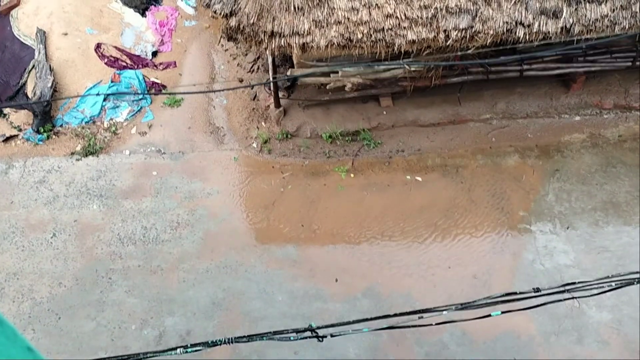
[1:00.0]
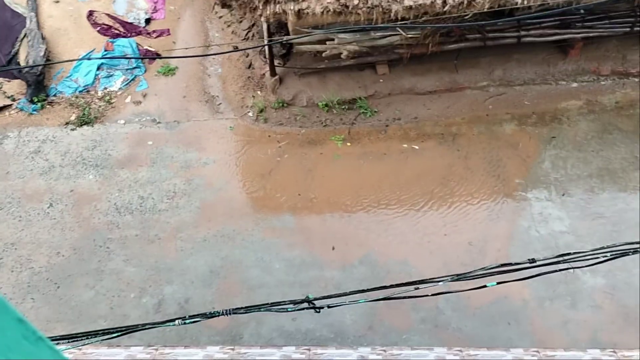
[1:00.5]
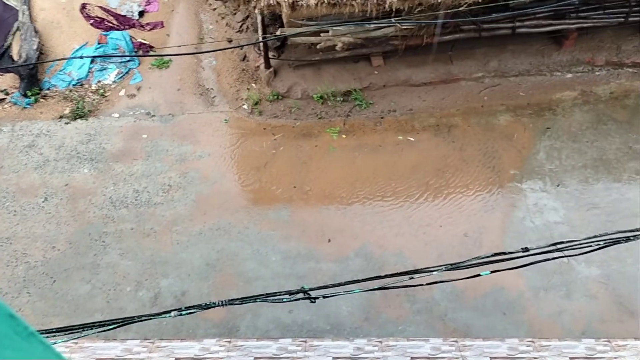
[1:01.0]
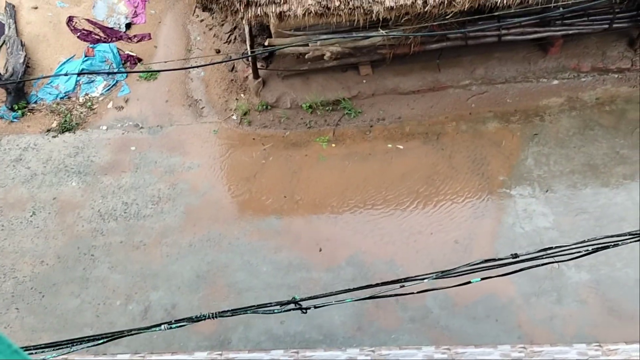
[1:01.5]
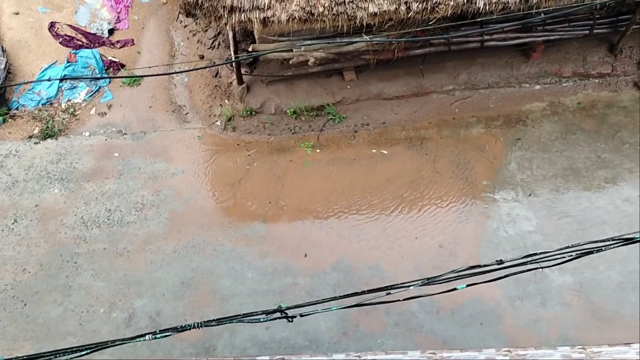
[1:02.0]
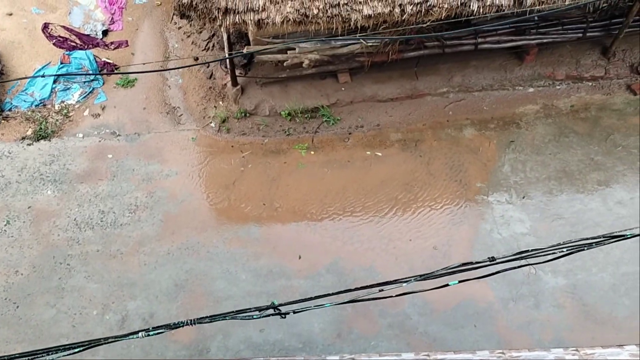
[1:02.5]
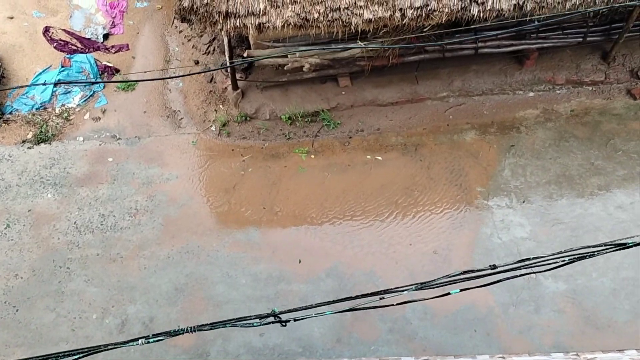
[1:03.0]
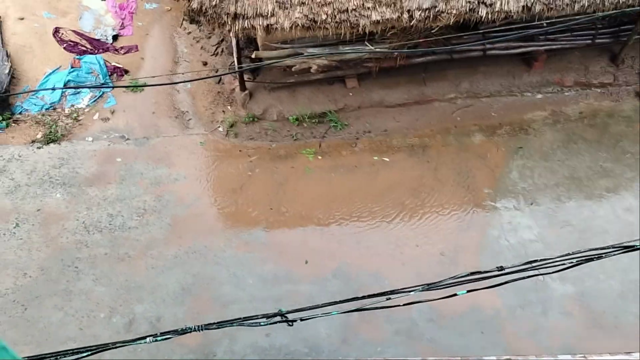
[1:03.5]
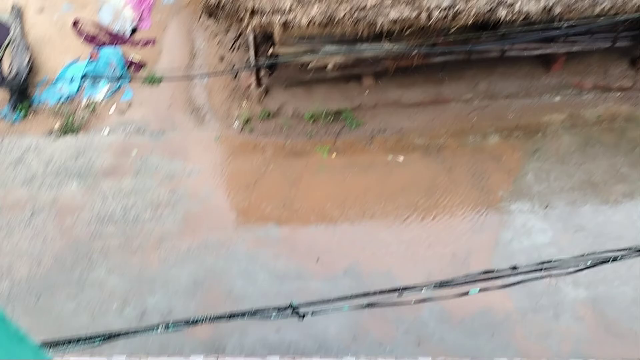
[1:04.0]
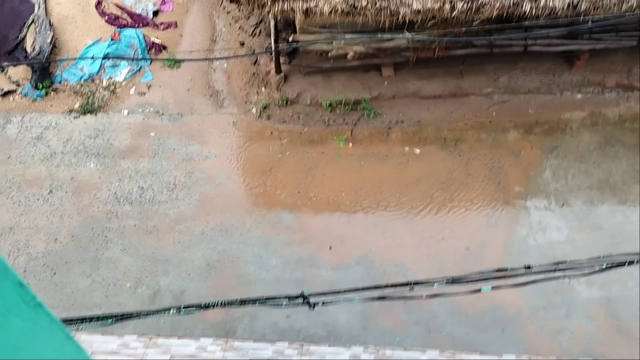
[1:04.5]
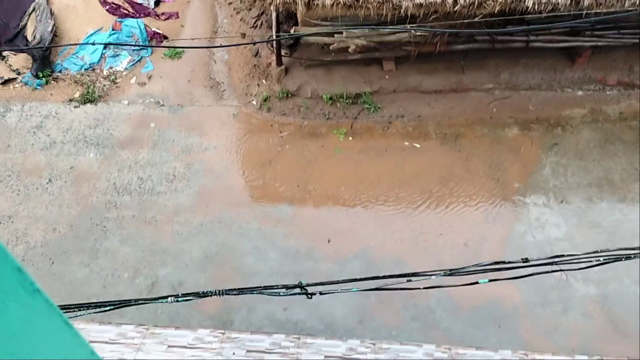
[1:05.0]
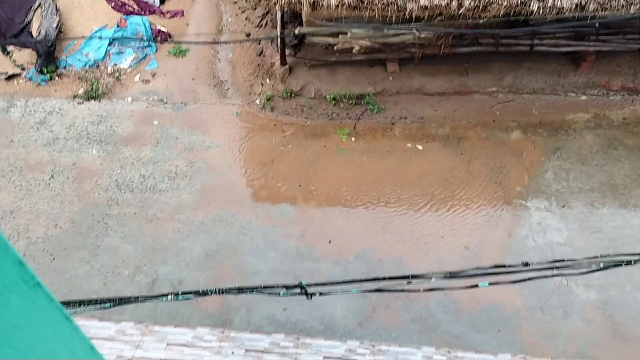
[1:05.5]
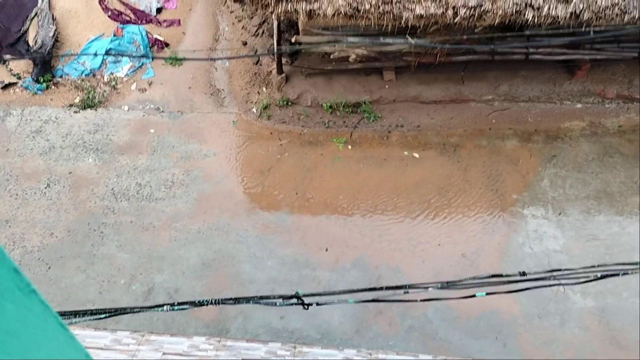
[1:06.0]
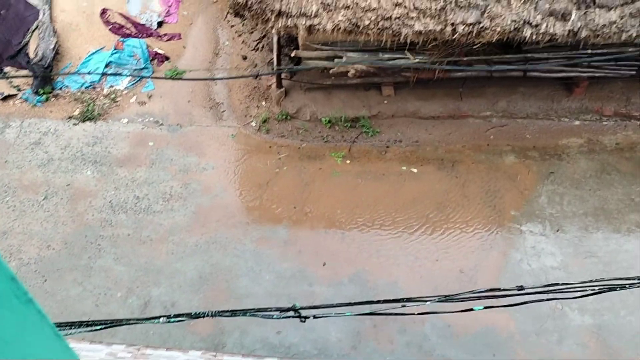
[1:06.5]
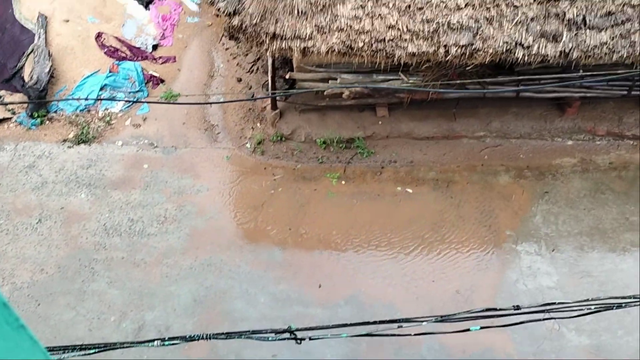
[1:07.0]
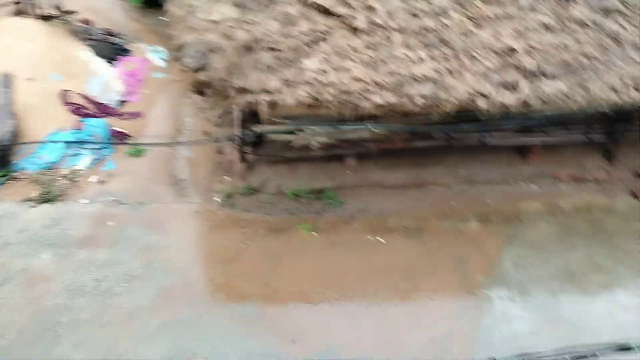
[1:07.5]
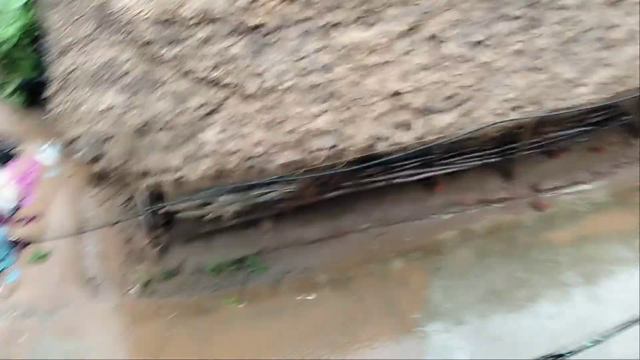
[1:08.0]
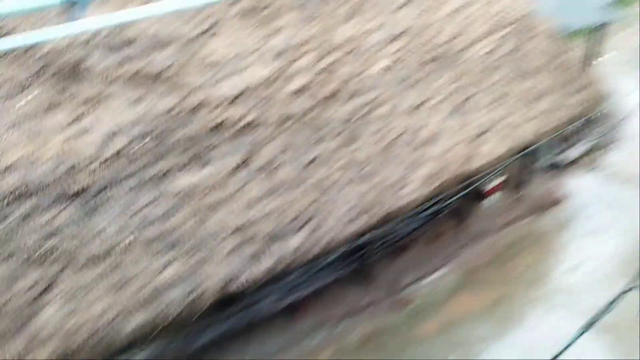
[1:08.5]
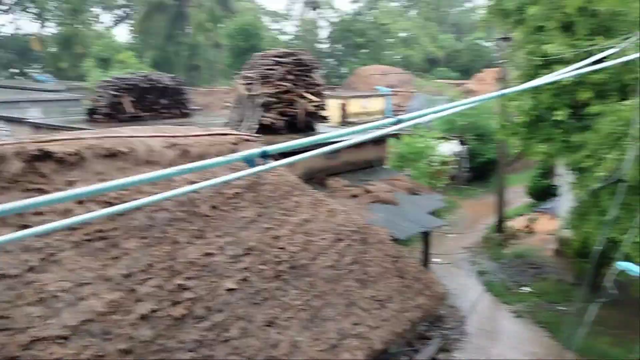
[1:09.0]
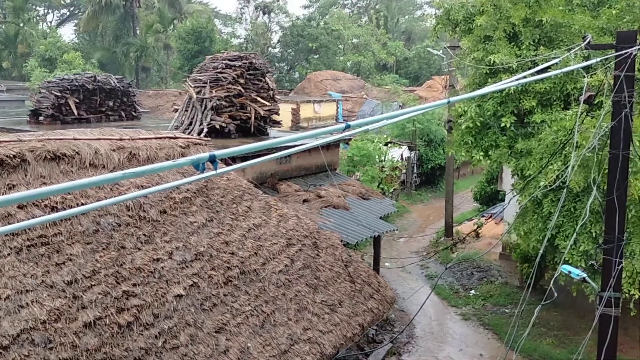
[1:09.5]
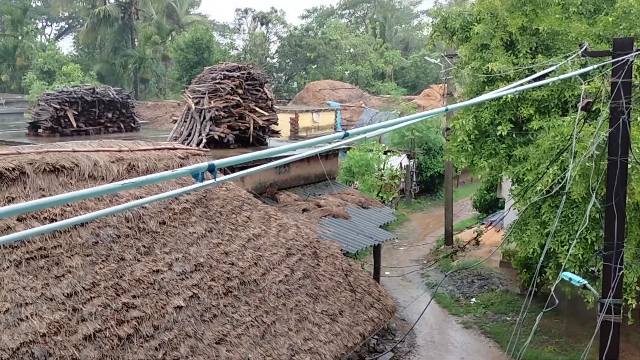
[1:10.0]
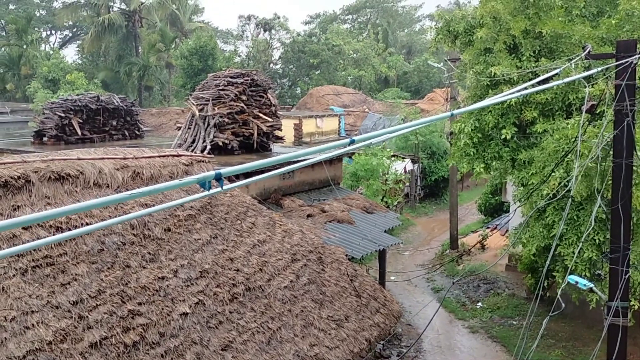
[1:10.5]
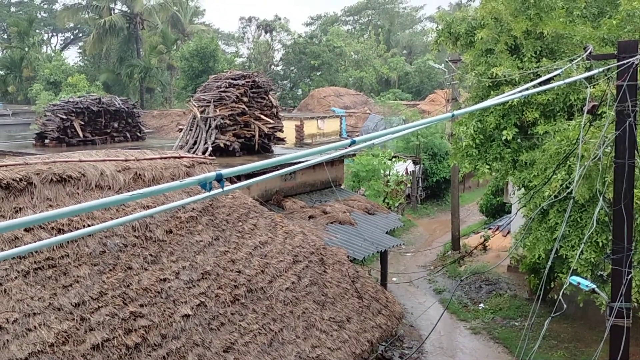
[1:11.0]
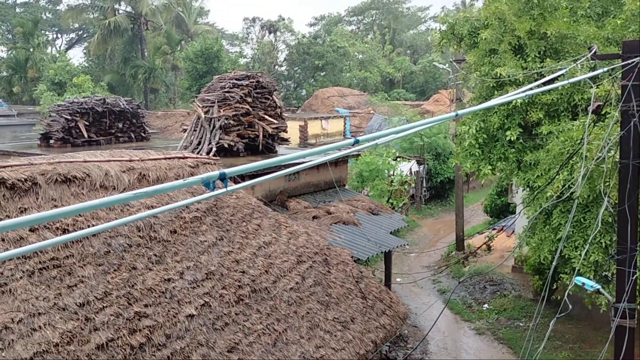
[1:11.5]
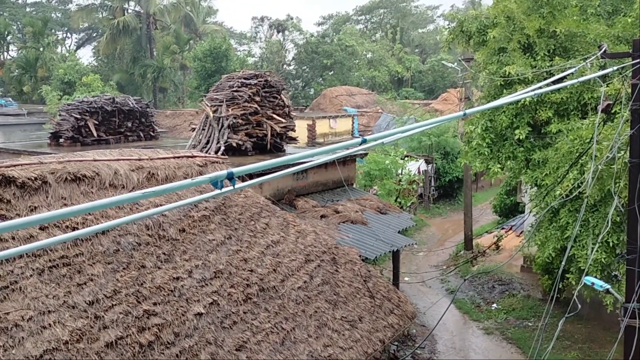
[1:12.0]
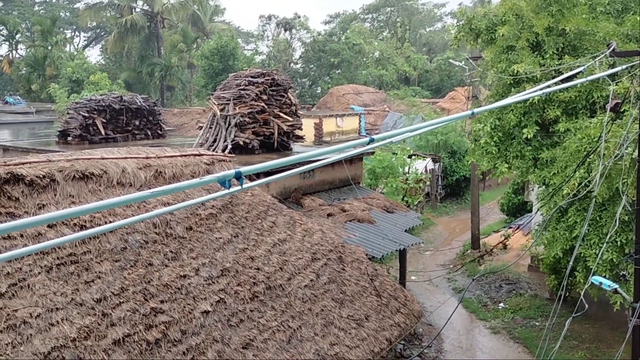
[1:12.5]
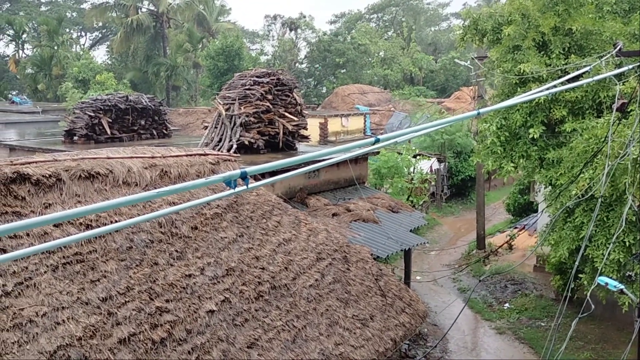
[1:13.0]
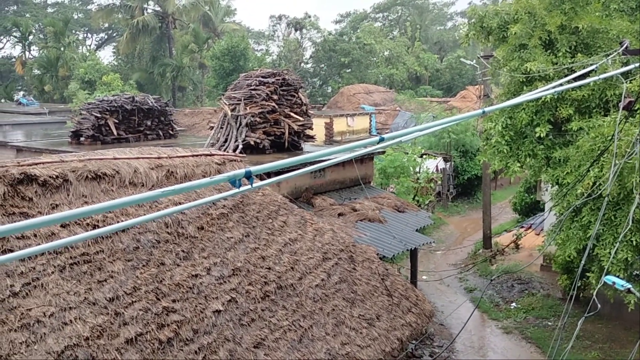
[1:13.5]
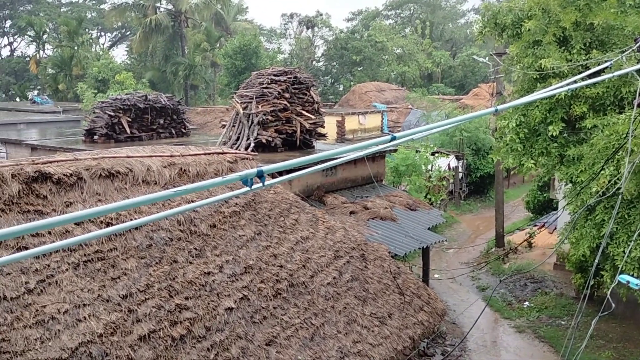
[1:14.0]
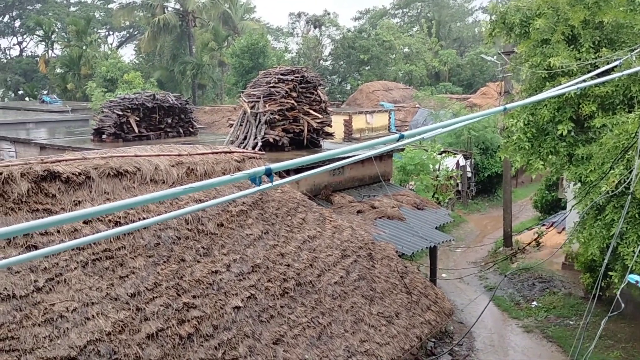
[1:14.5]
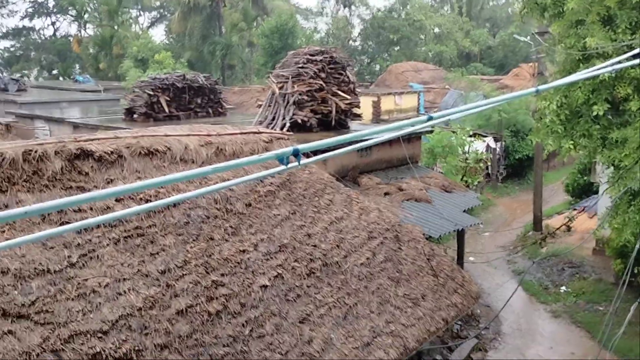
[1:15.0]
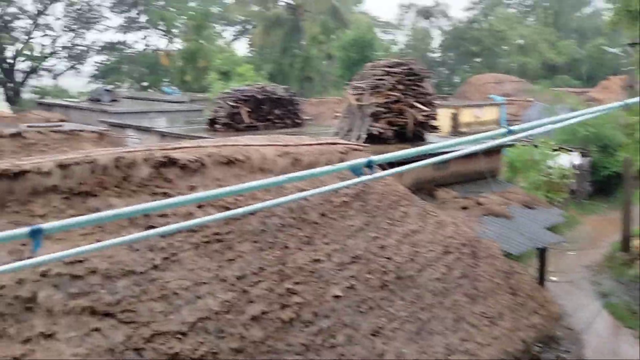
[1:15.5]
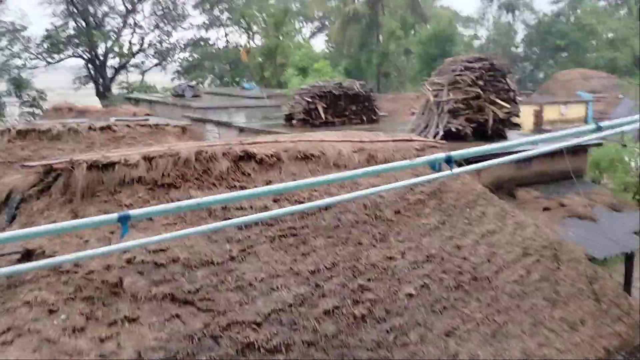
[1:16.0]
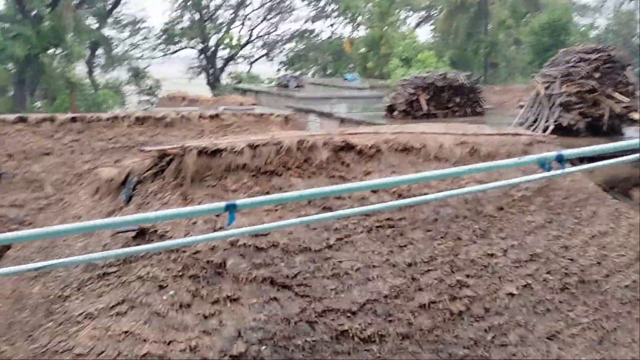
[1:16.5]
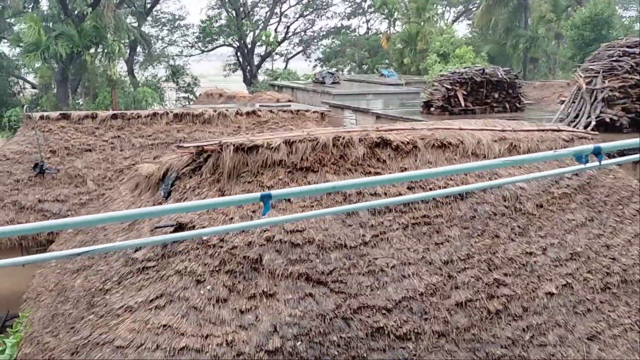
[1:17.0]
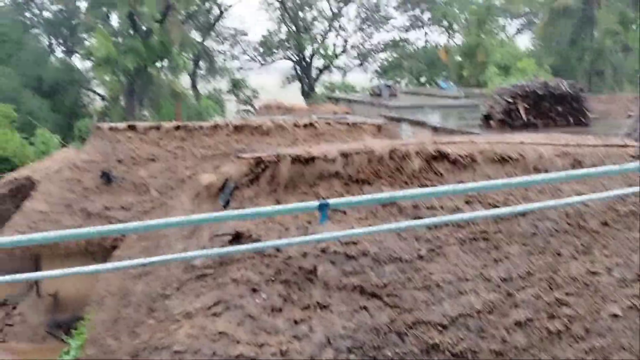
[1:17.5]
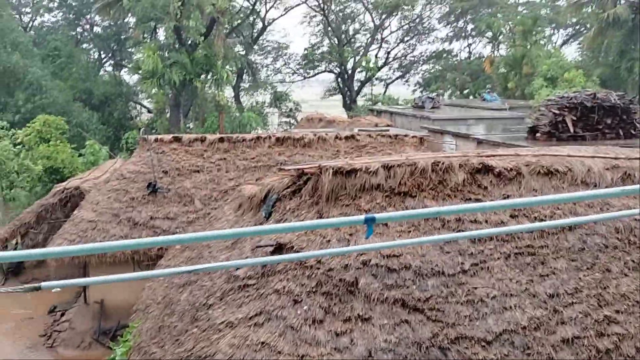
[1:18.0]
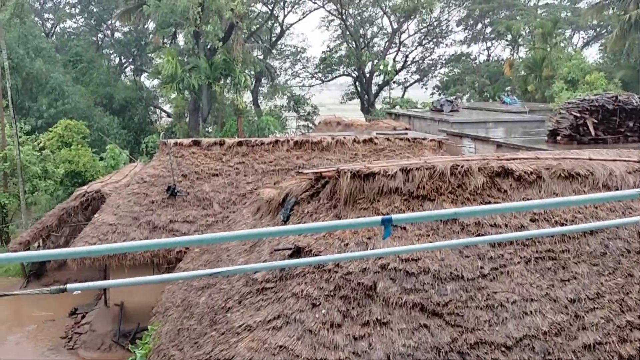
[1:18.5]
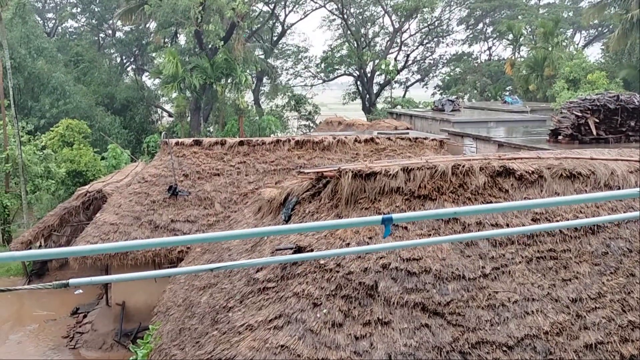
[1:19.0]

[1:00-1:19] More of the flooding below the sheltered area is visible. The houses down there appear to be straw and wooden, and they seem to have some awning, so there is a little metal in the structure. Two bundles of sticks are piled on top of one home-like structure or shelter, possibly not a home. There seem to be electrical lines; none of them are down, they seem intact, and they are attached to the house, with small lines protruding from the larger ones and going toward the homes. In the background a few other shelters can be made out slightly, not many, so it seems to be a small sheltered area. One building looks a little yellowish, and there are also some taller electrical poles.